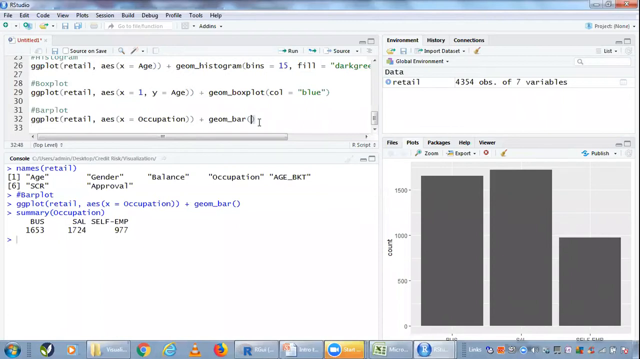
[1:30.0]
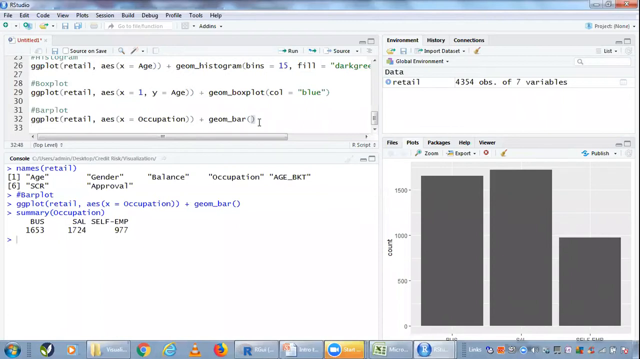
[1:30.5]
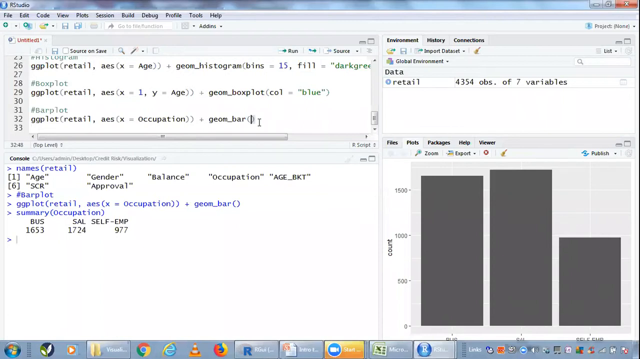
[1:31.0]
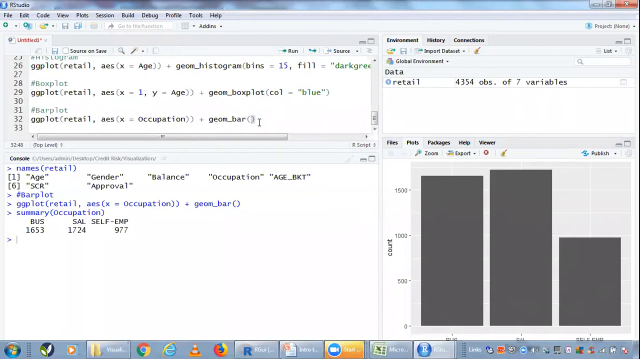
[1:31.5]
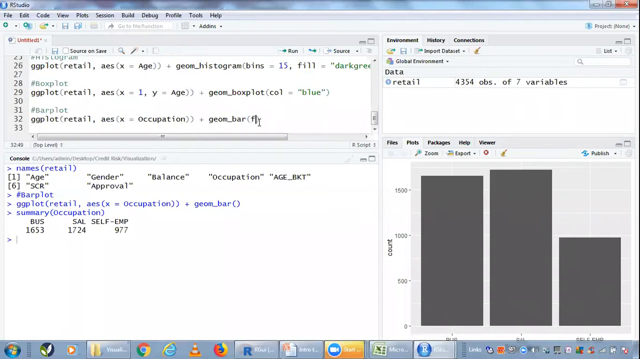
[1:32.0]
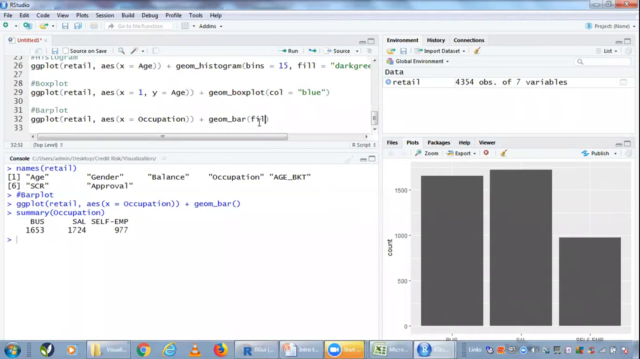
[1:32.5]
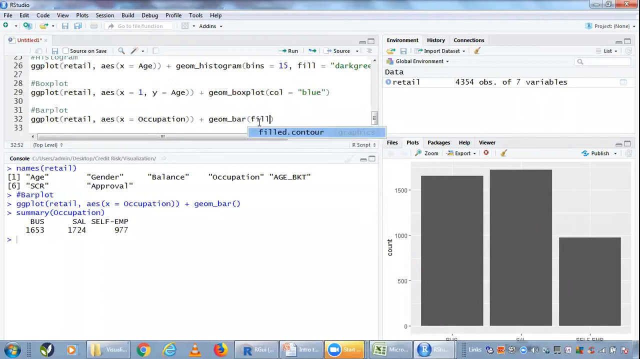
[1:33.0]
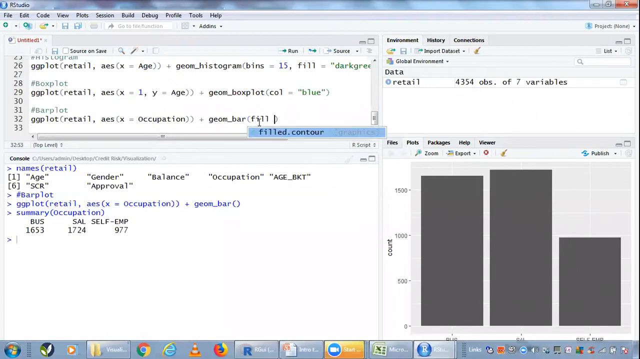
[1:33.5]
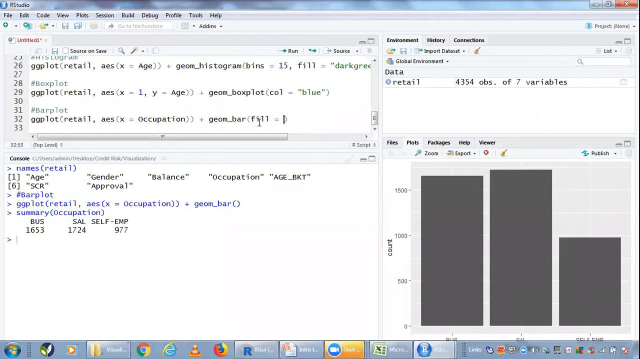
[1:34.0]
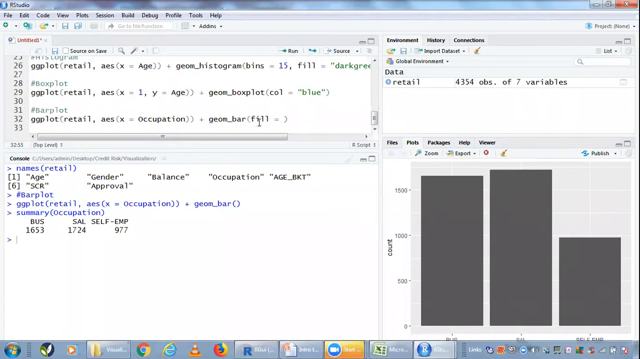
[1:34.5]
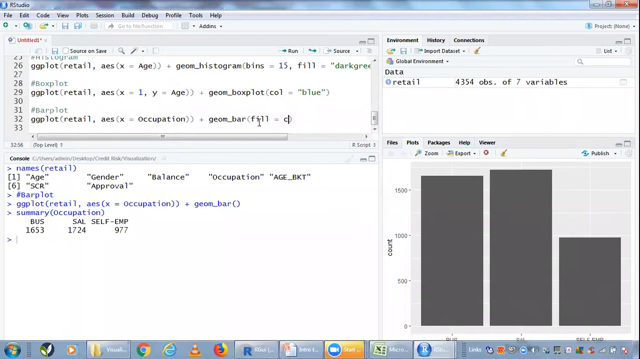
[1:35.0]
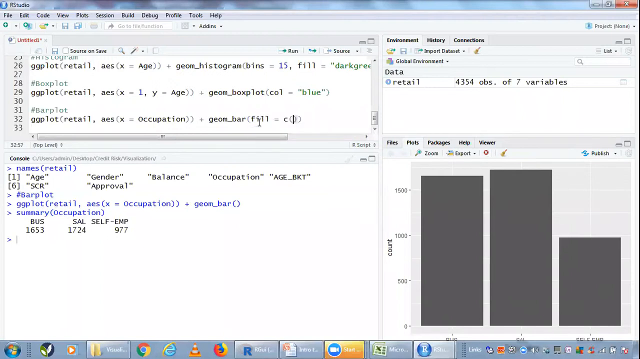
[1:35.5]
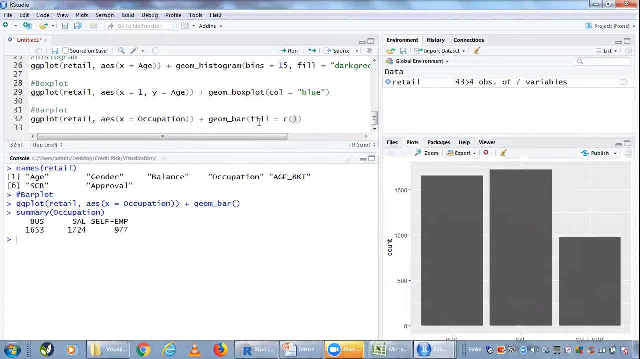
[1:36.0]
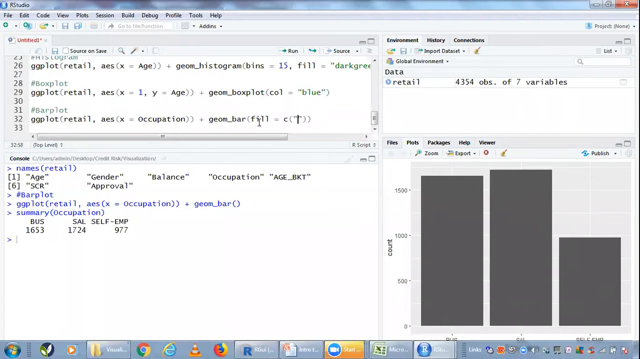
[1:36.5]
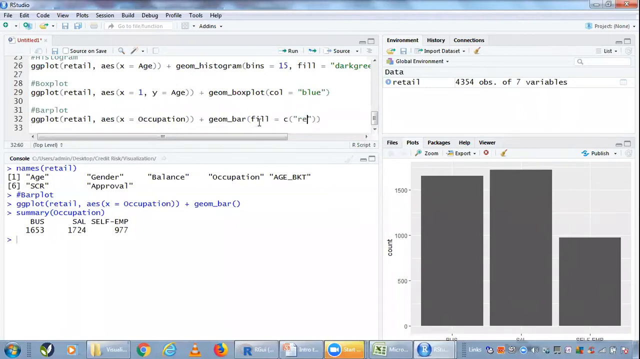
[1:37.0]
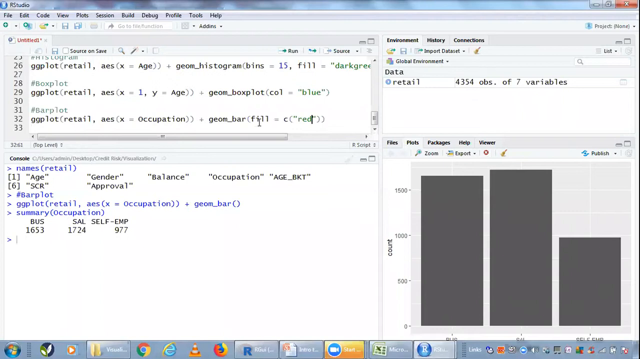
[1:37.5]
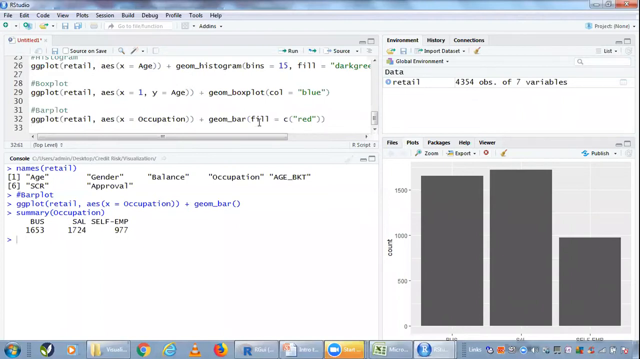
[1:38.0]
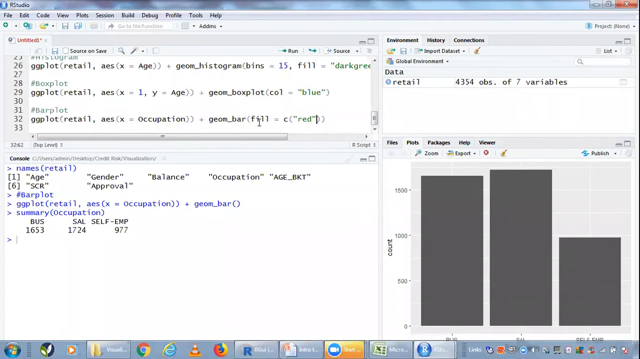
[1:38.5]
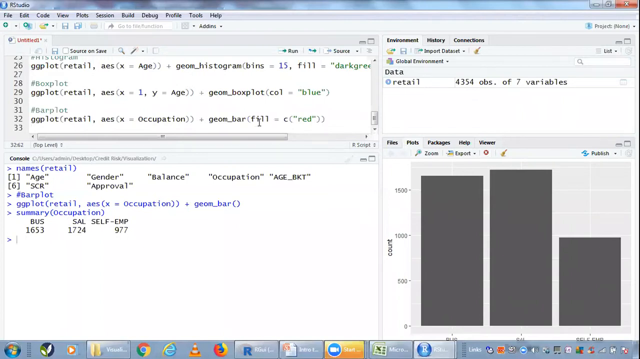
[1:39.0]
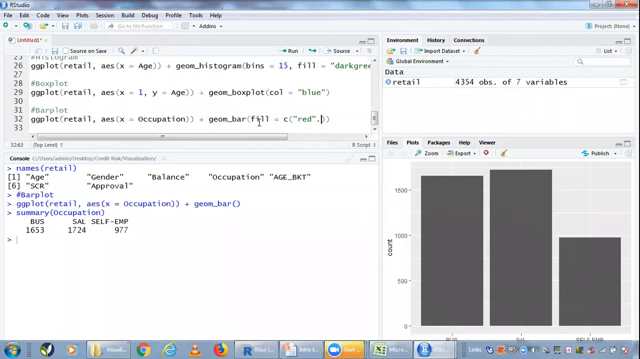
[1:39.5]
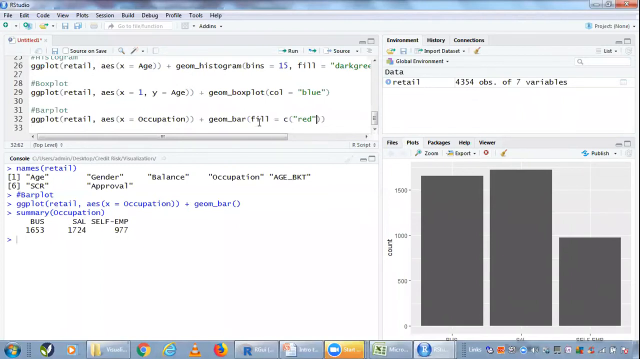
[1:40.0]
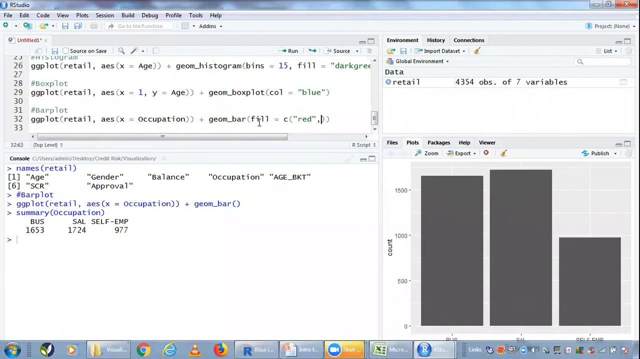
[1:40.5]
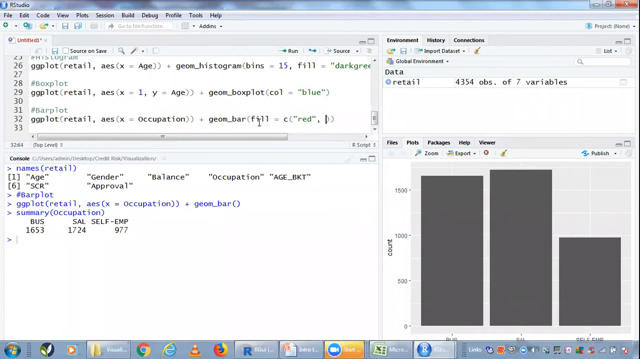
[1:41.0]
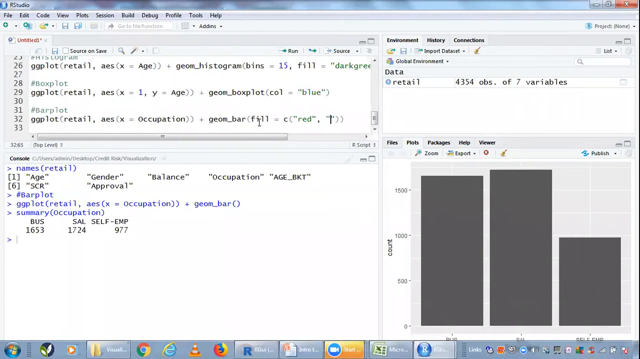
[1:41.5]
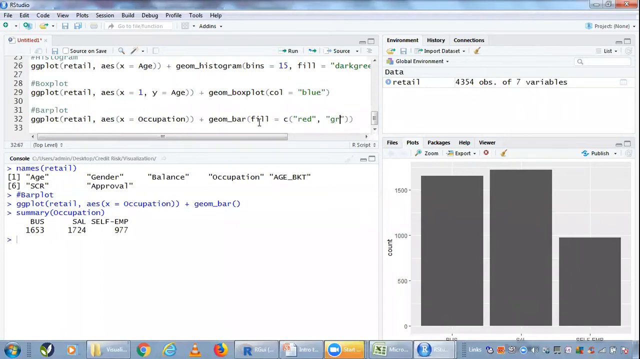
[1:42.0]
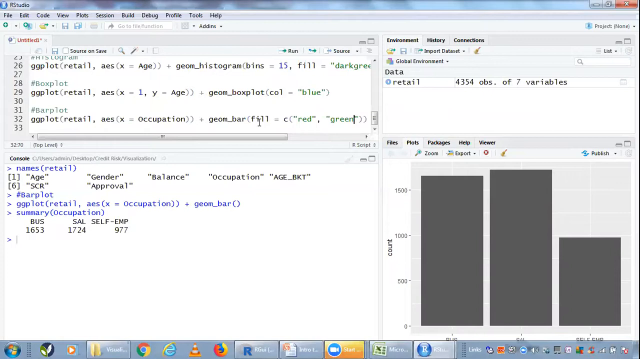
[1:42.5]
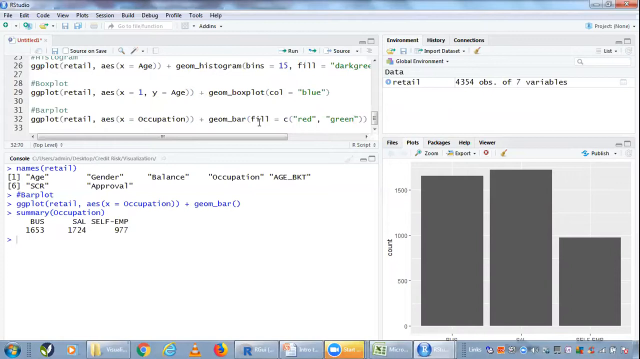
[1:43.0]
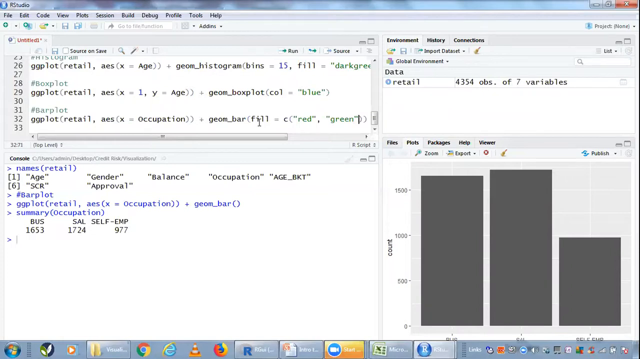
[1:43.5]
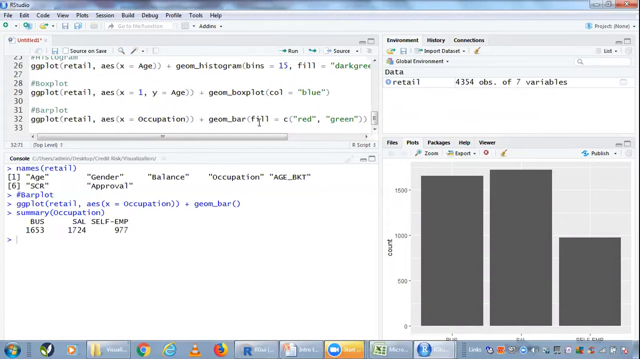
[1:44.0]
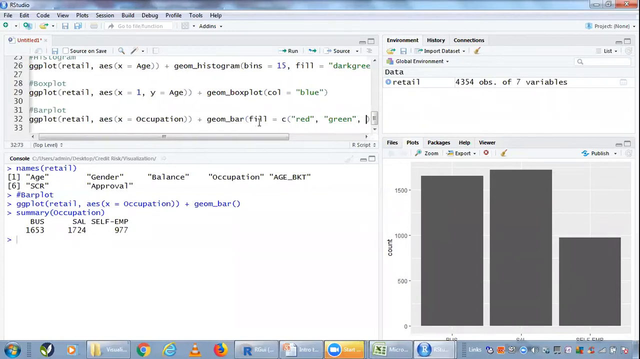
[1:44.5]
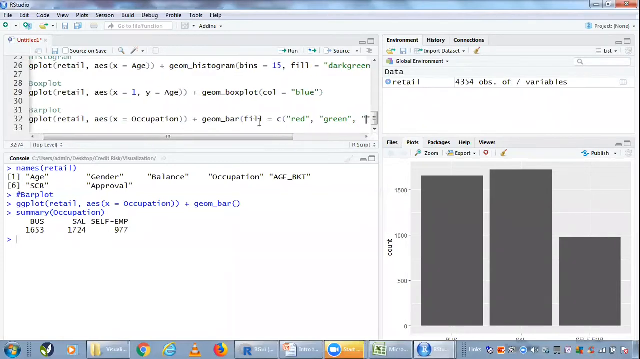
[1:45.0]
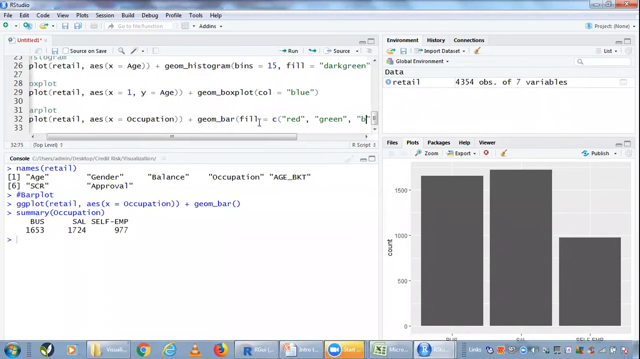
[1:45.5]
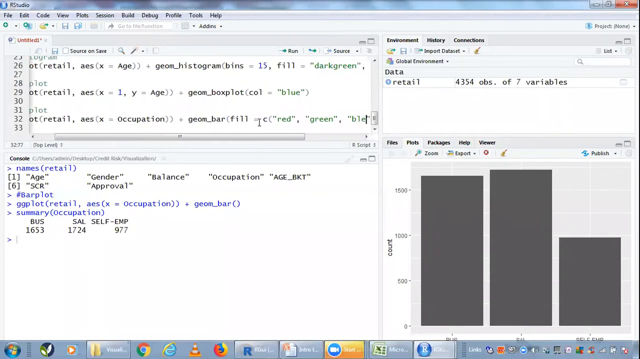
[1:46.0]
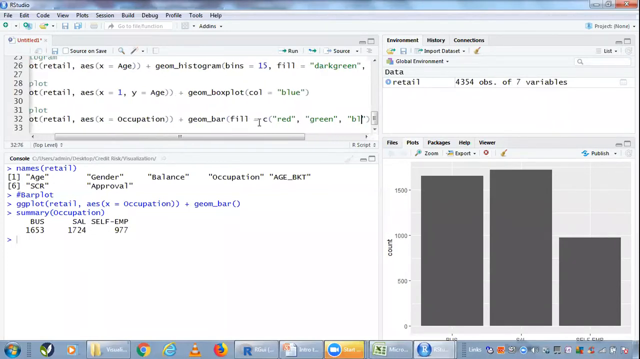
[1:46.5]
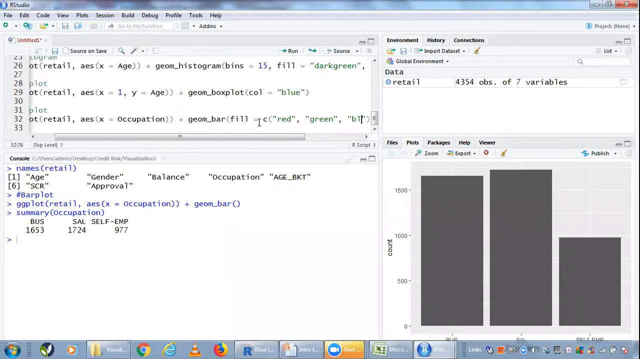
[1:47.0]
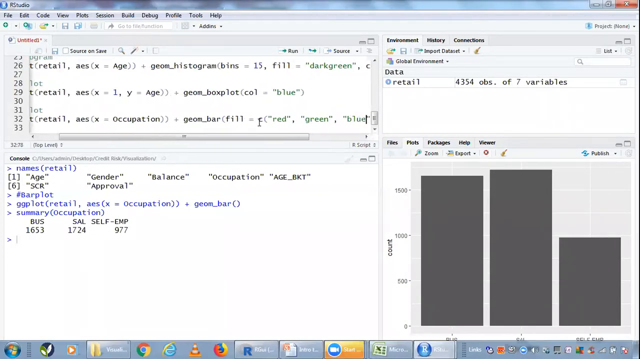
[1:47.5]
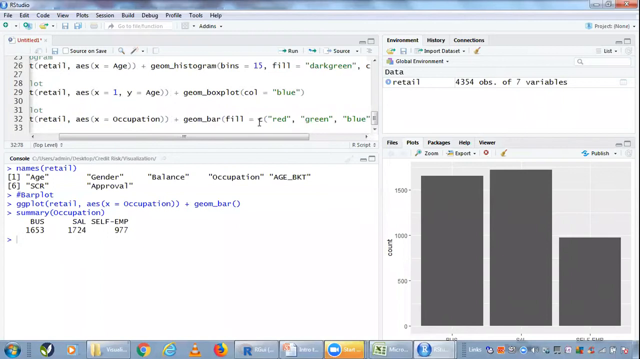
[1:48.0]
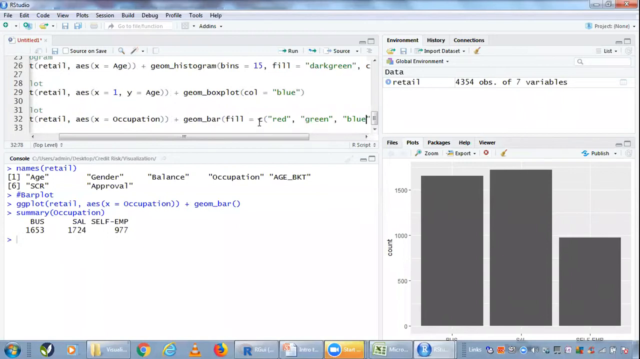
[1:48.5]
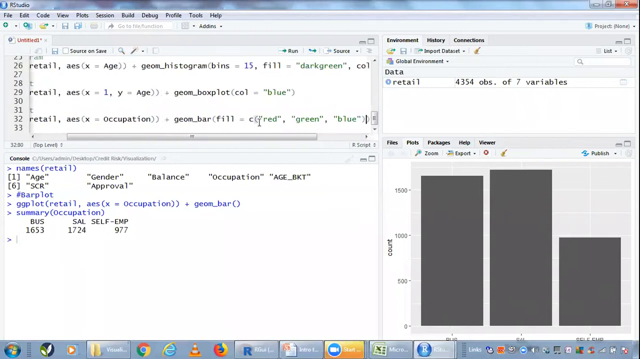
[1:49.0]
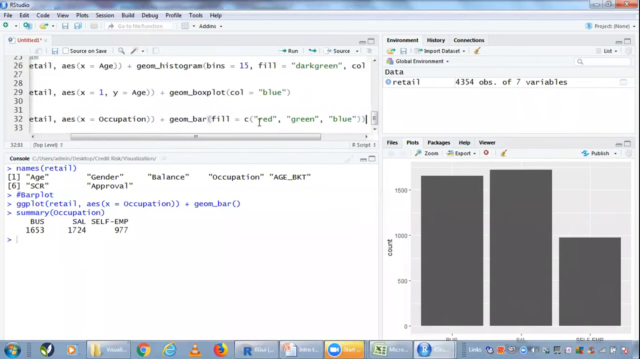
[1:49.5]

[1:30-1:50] The RStudio IDE shows four panels: a top left panel titled "Untitled" with code related to boxplots; a top right panel for the environment with one line of data for "retail"; a console panel at the bottom left with different prompts written in it; and a plots panel at the bottom right with a bar graph of three grey vertical bars, which seems to plot occupation counts such as the number of people in business, sales, or self-employed. The cursor goes up to the top left Untitled panel and clicks between the parentheses on the last line next to "geom_bar". The user types "fill", and a small autofill suggestion box pops up with "filled.contour", but instead the user types "c(red, green, blue)".